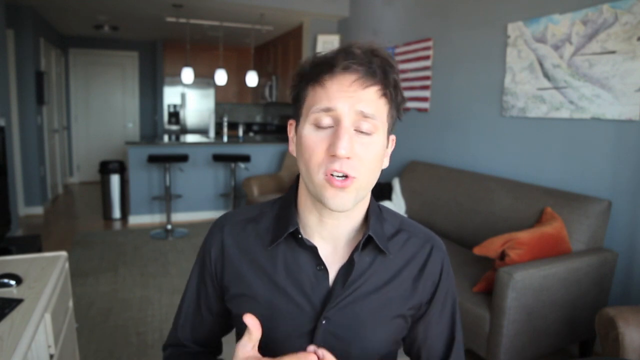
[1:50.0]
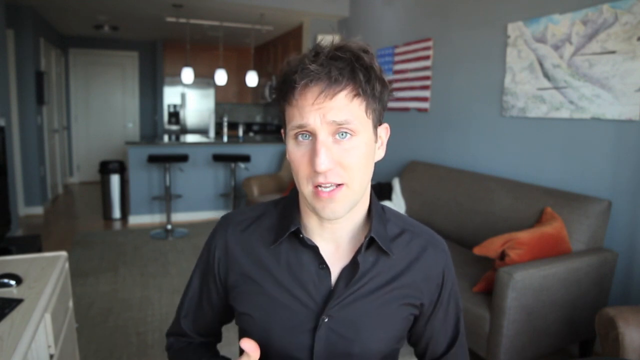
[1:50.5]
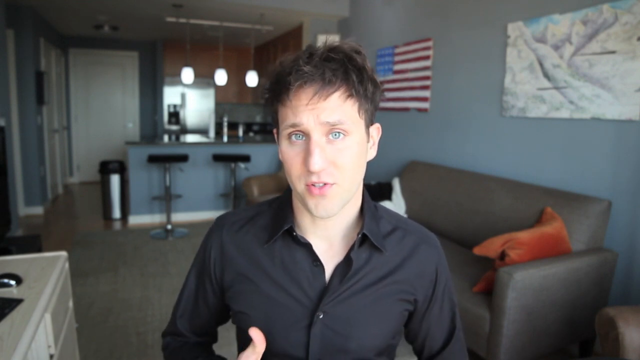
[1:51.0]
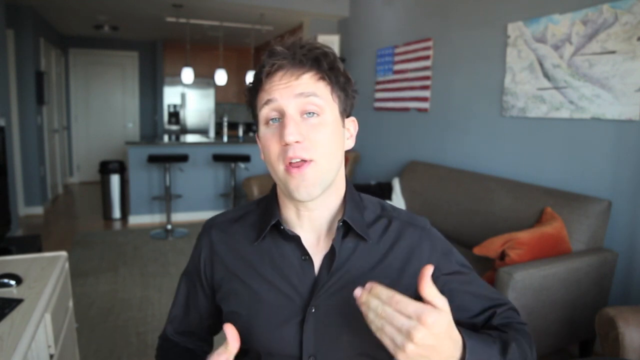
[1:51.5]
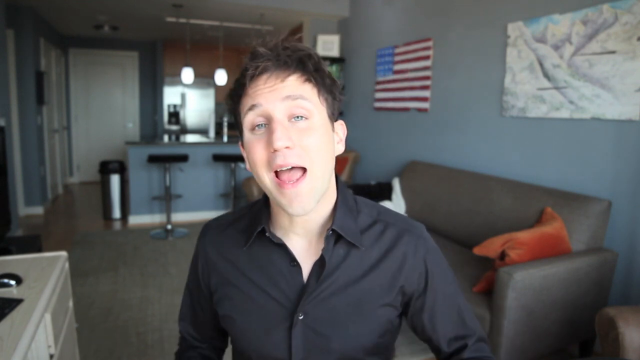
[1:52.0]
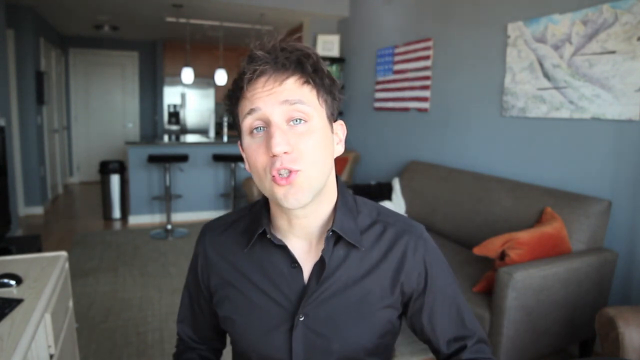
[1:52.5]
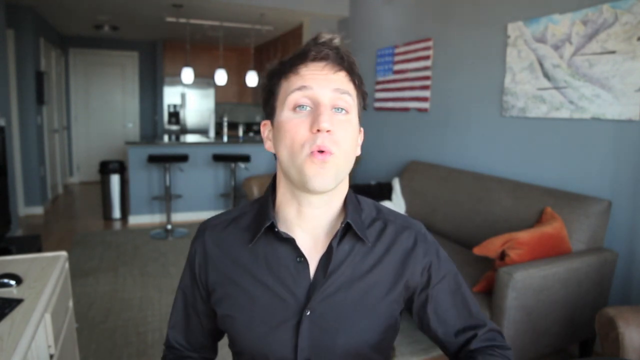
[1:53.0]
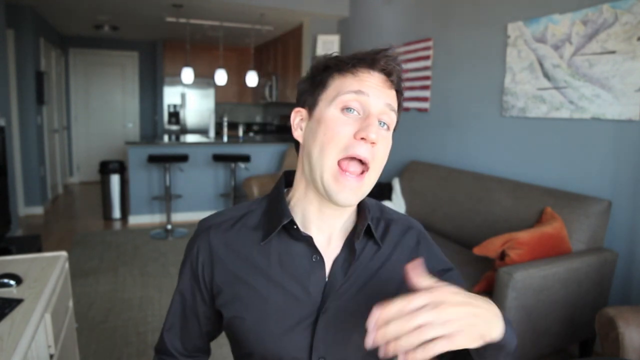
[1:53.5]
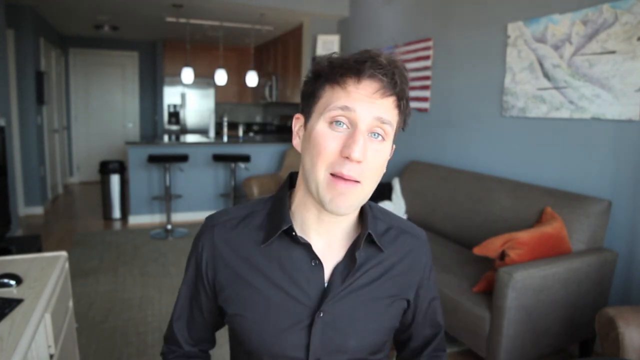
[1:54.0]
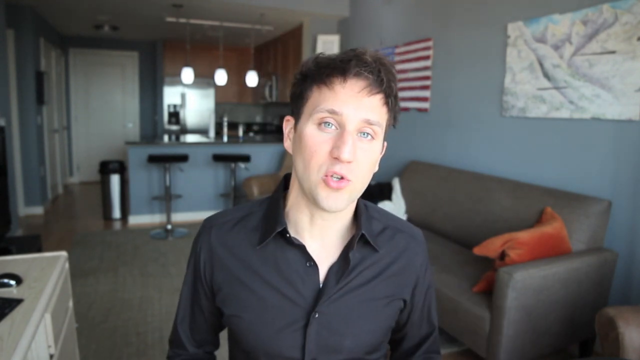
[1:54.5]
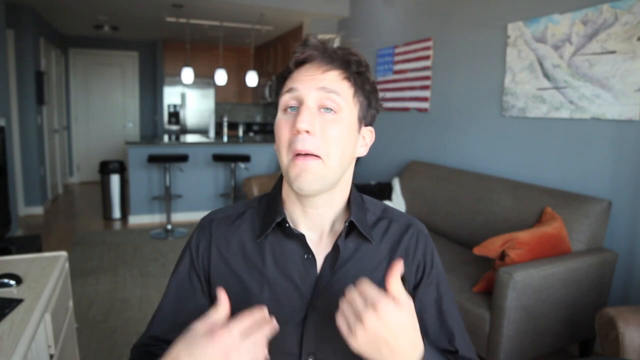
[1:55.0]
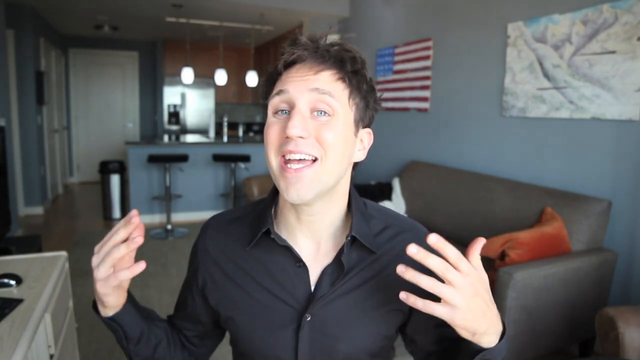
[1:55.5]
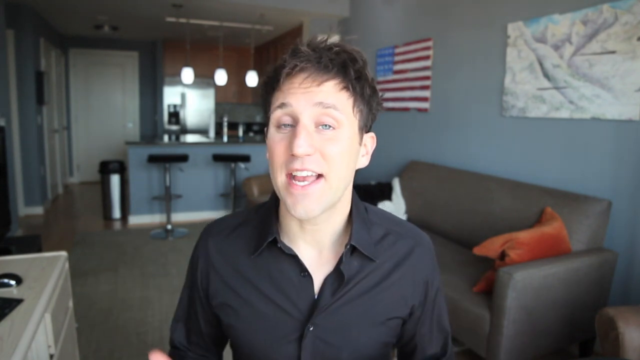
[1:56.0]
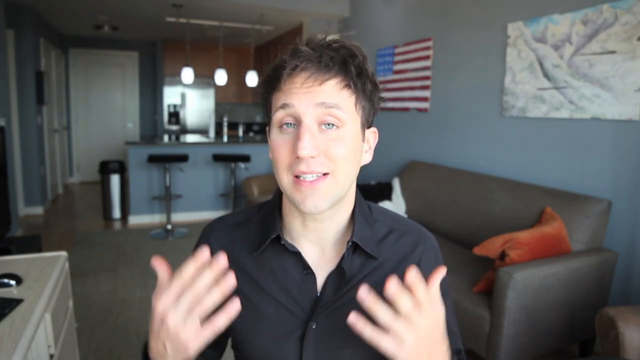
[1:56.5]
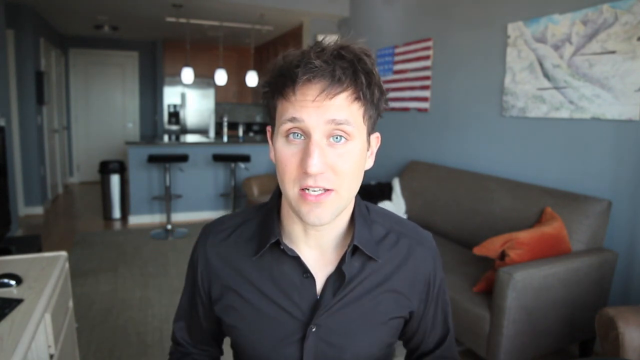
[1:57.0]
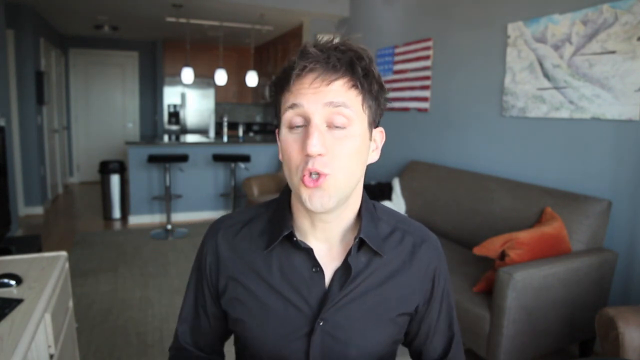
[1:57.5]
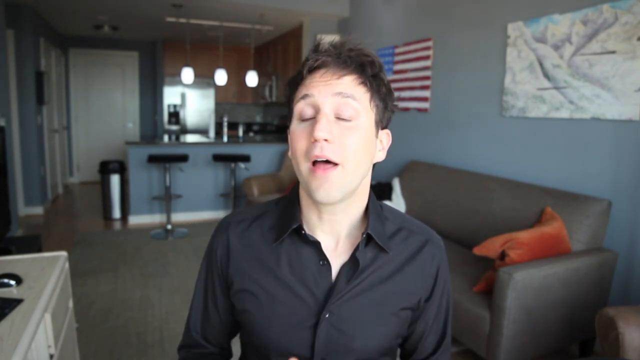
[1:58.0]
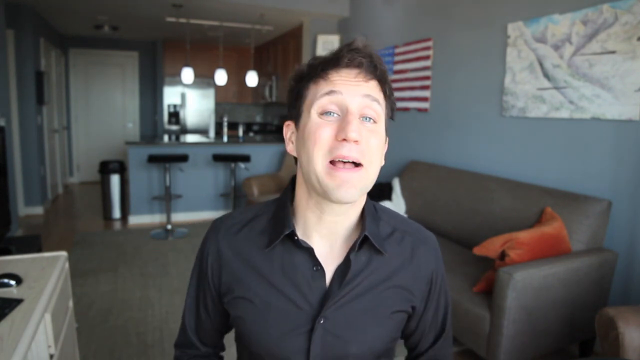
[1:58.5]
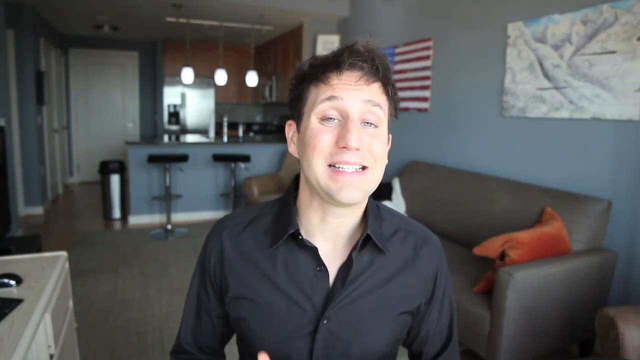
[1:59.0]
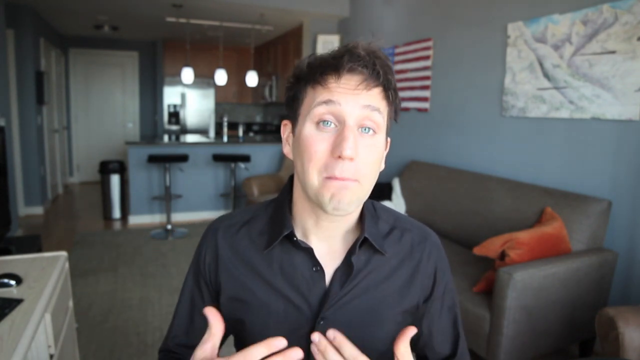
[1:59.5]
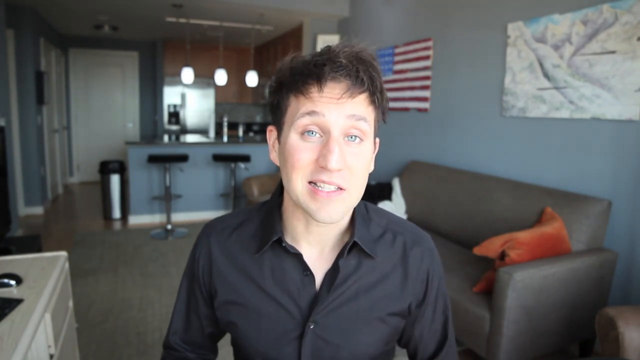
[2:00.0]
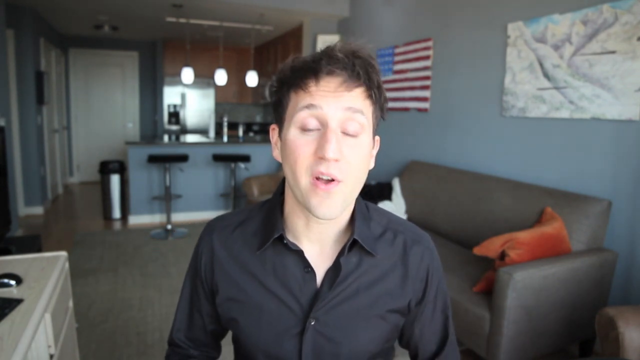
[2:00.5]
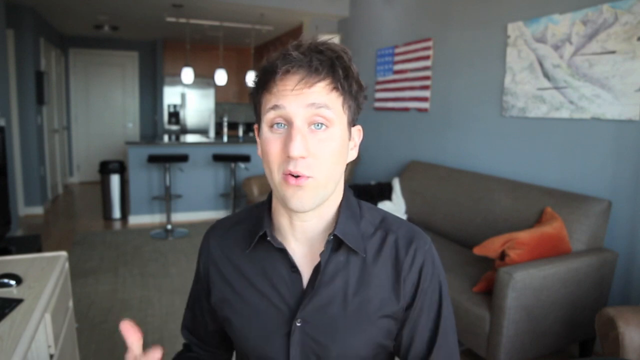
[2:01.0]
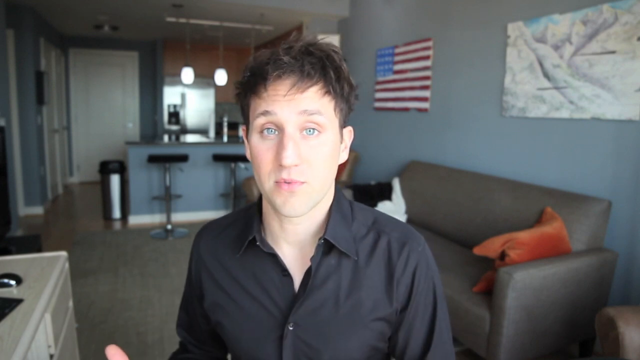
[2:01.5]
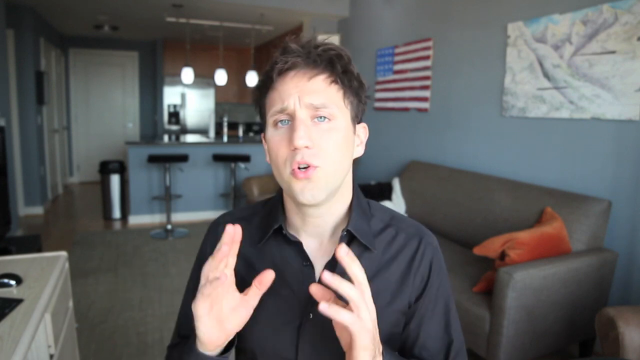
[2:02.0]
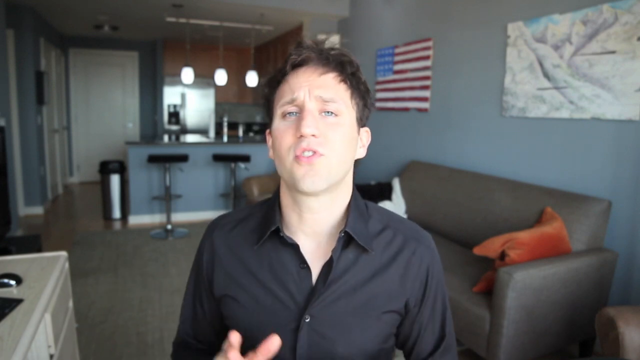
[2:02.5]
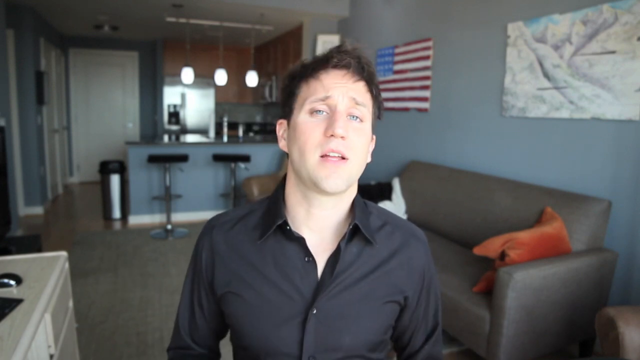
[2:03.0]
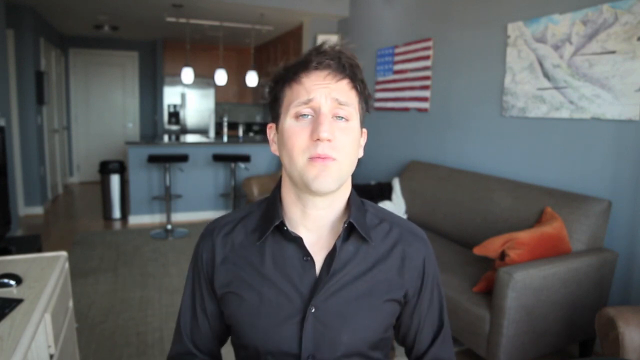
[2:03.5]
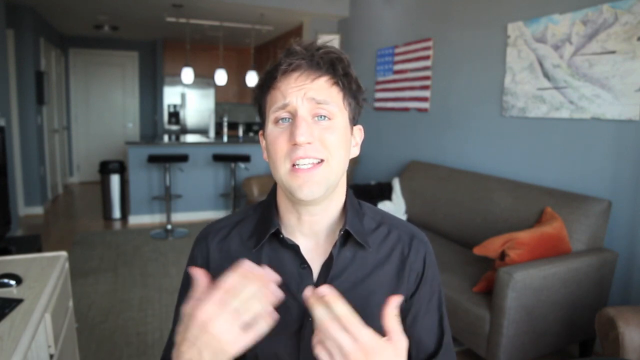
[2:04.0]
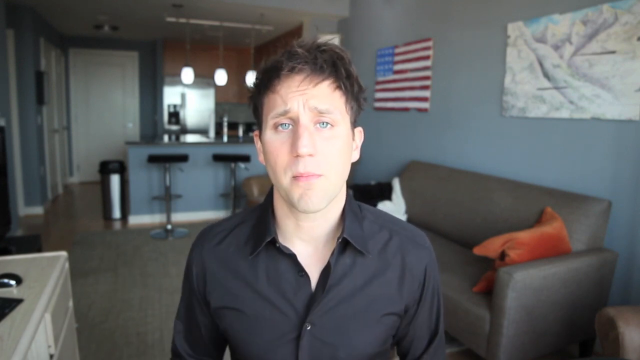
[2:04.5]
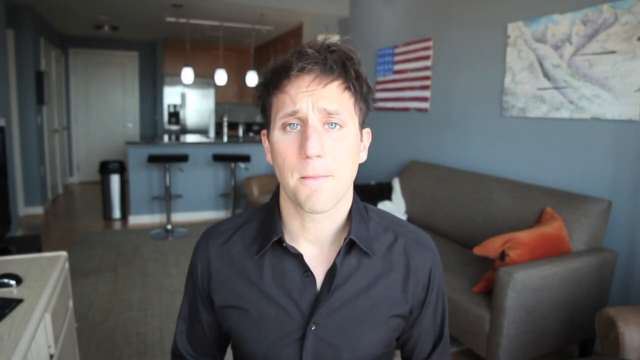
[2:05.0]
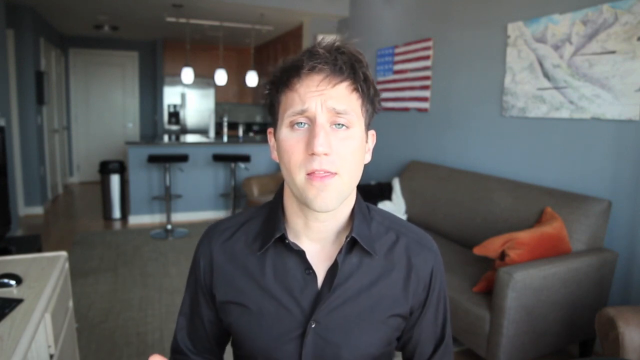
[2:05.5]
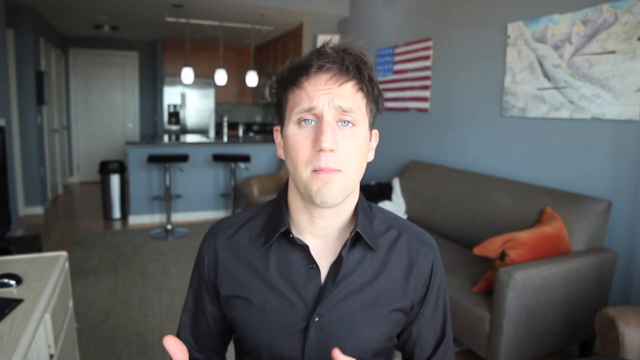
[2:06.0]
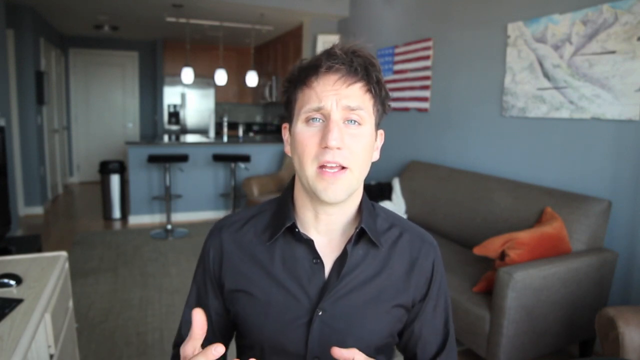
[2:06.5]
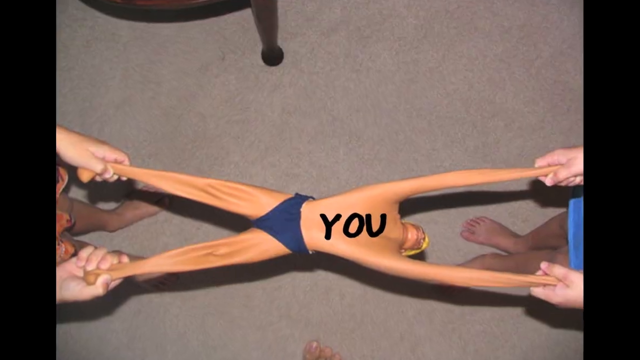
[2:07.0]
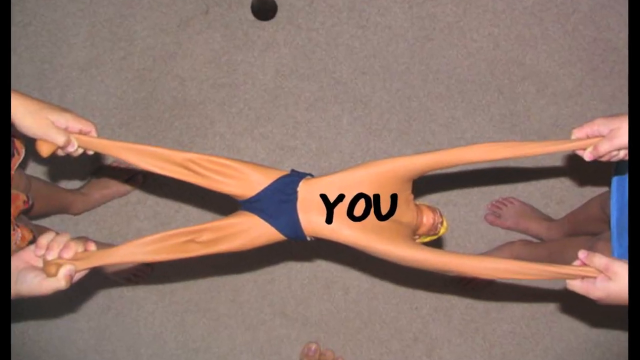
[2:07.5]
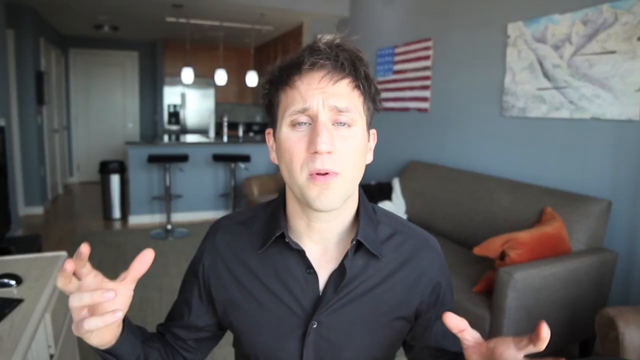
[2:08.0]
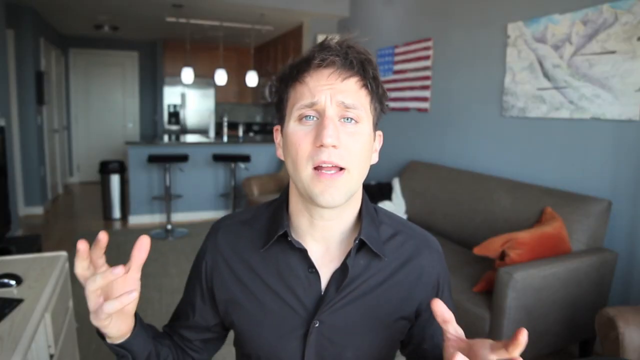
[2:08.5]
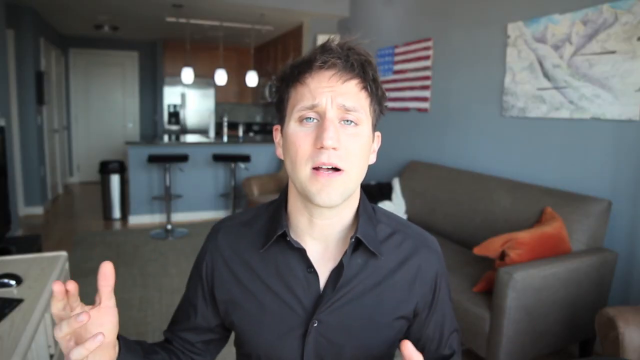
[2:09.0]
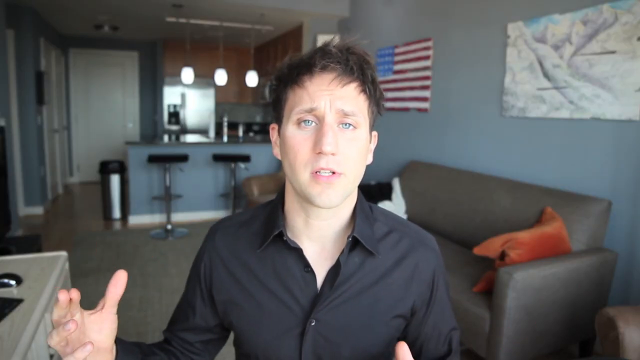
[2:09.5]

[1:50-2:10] A man in his mid-twenties in a black button-up shirt talks to the camera, very animated in his storytelling and gesturing with his hands. He is in an apartment, very likely his own. Behind him is a tan couch with an orange sofa cushion; on the wall above it is a portrait of the American flag, with a portrait of some kind of mountain range to its right. The kitchen is visible behind him, with three lights hanging from the ceiling lighting it up, barstools next to the kitchen counter, and what appears to be a silver garbage can to the left of the counter. The video cuts to a picture of the toy Stretch Armstrong being pulled by two people, with the word "you" written on the doll in black marker.